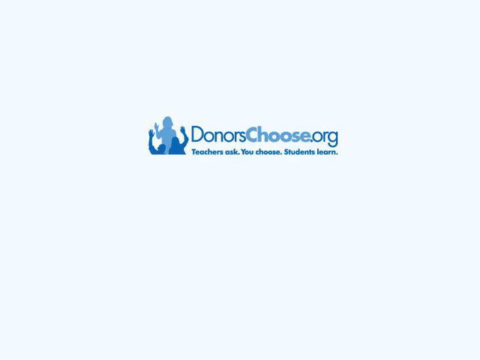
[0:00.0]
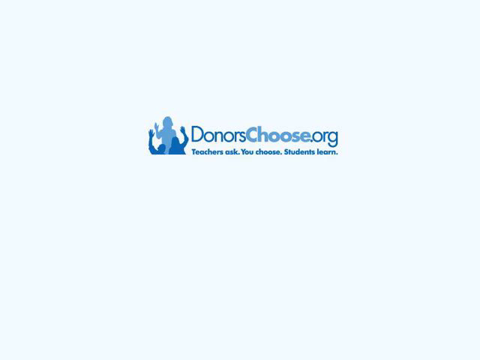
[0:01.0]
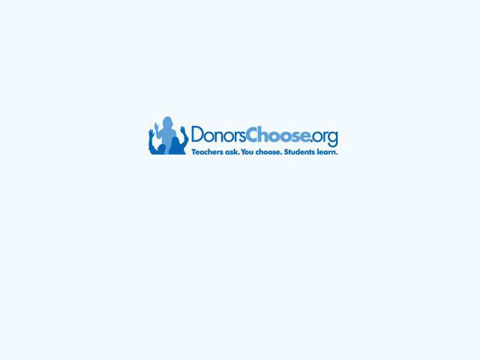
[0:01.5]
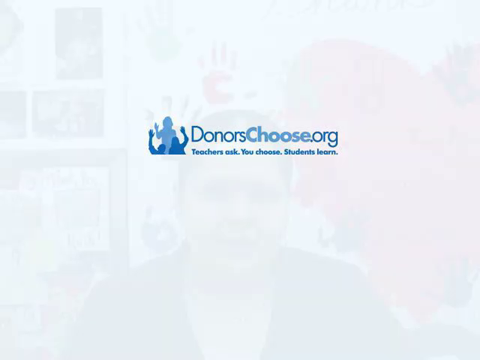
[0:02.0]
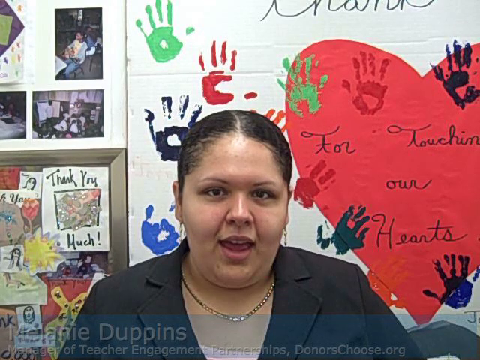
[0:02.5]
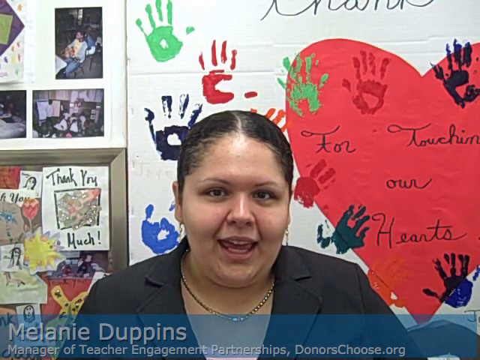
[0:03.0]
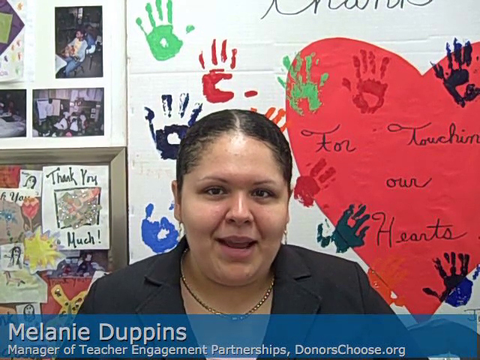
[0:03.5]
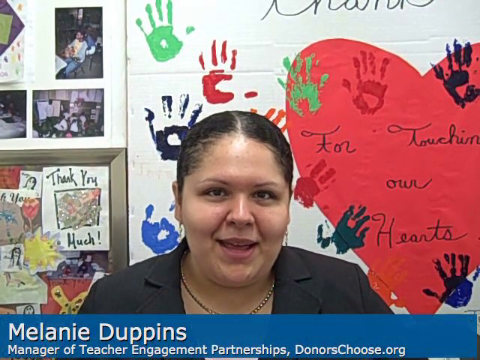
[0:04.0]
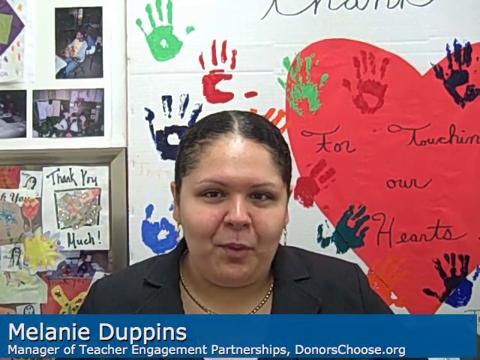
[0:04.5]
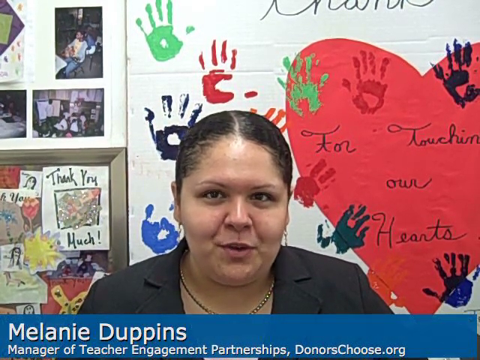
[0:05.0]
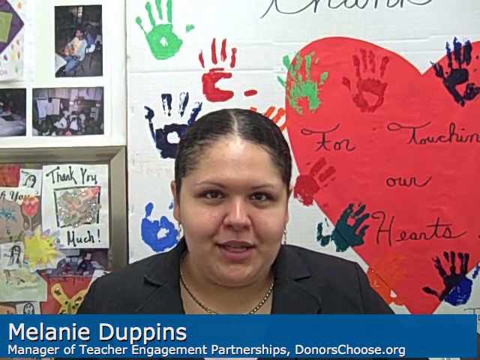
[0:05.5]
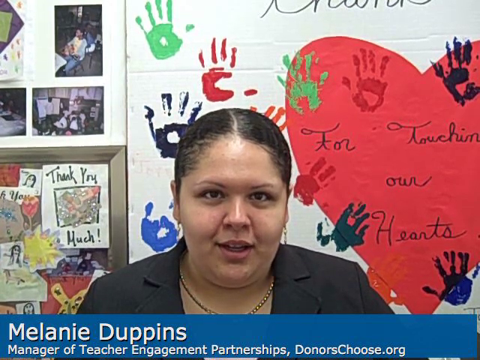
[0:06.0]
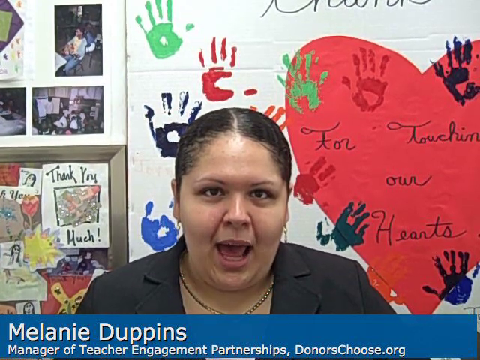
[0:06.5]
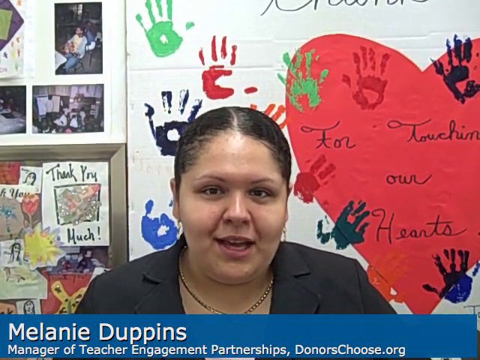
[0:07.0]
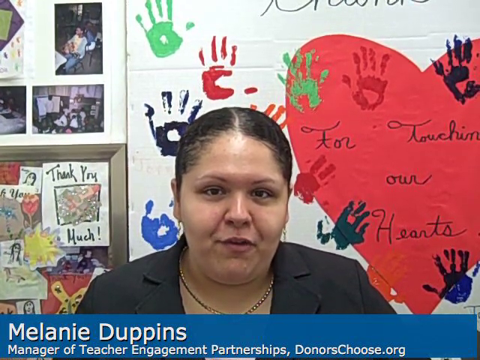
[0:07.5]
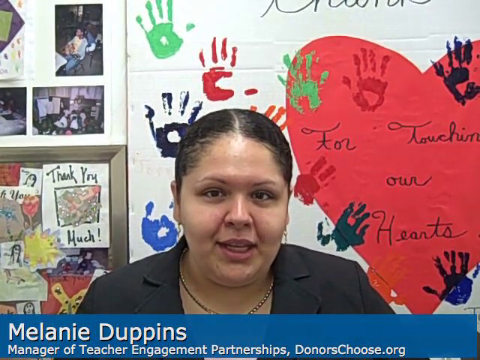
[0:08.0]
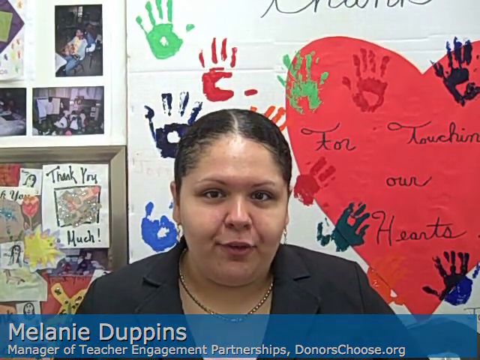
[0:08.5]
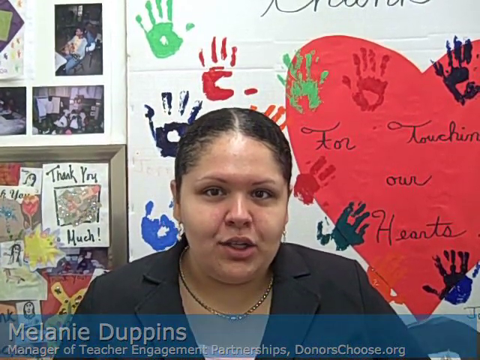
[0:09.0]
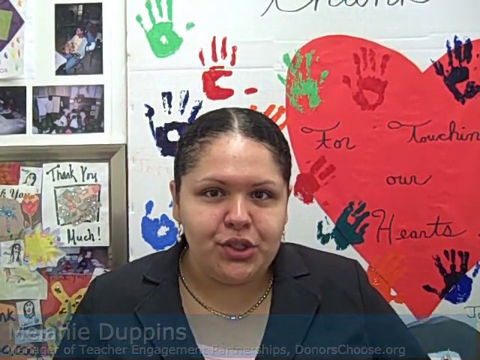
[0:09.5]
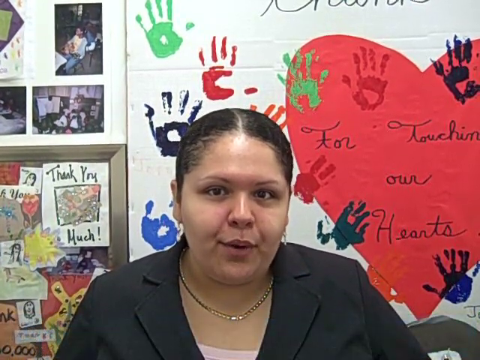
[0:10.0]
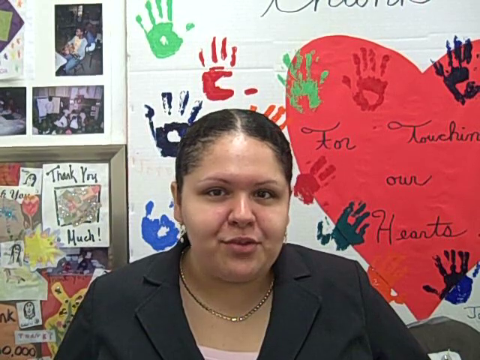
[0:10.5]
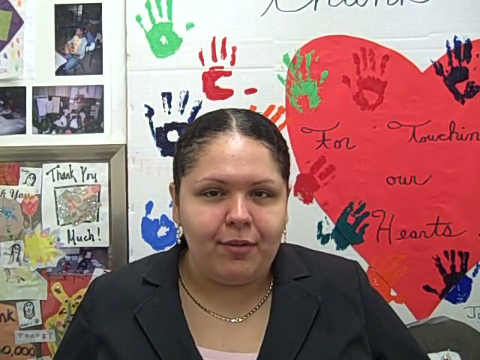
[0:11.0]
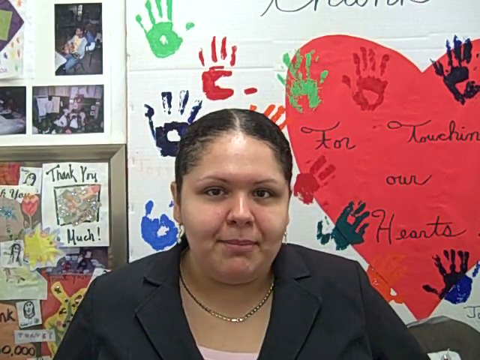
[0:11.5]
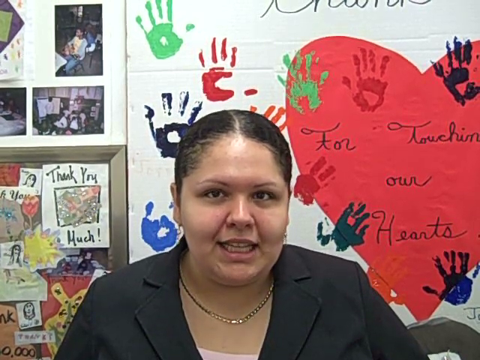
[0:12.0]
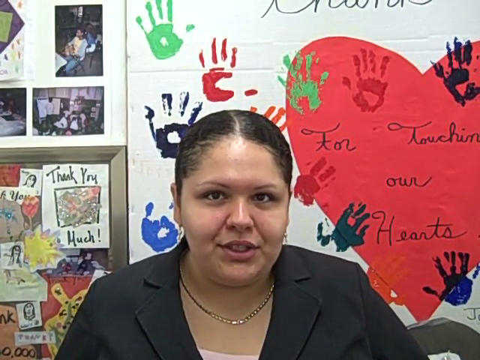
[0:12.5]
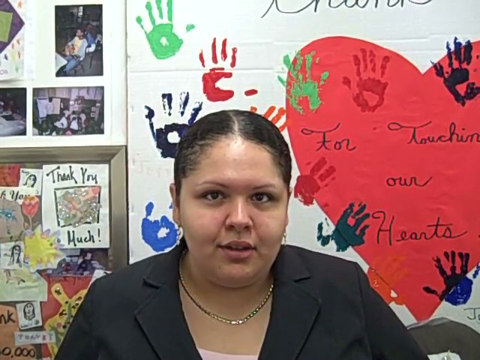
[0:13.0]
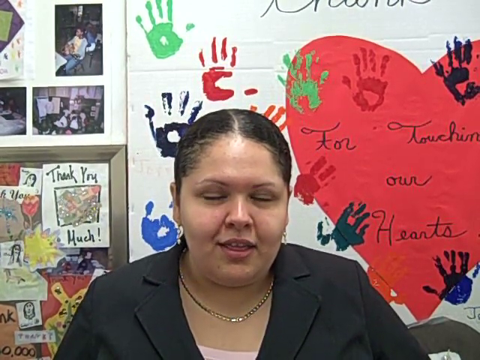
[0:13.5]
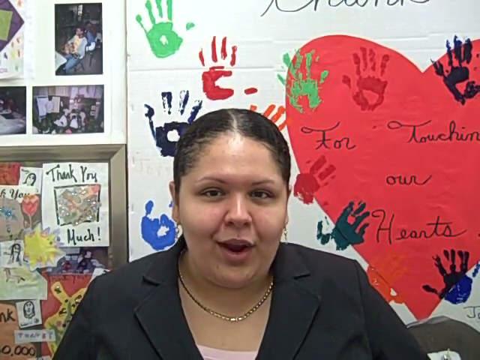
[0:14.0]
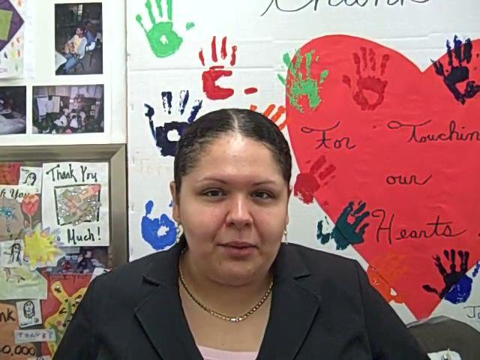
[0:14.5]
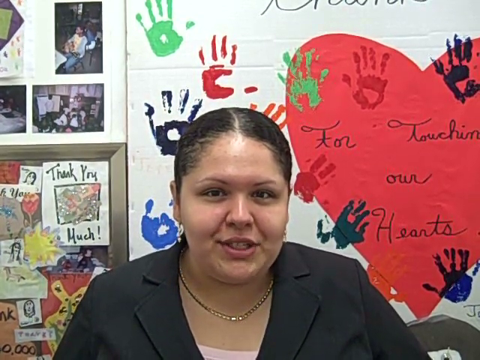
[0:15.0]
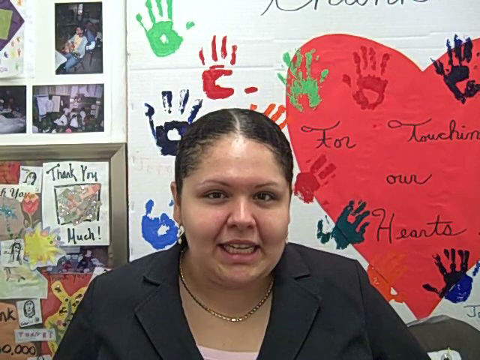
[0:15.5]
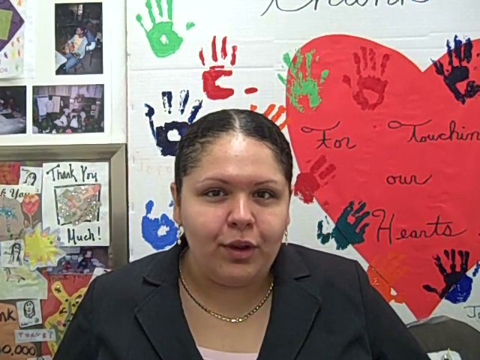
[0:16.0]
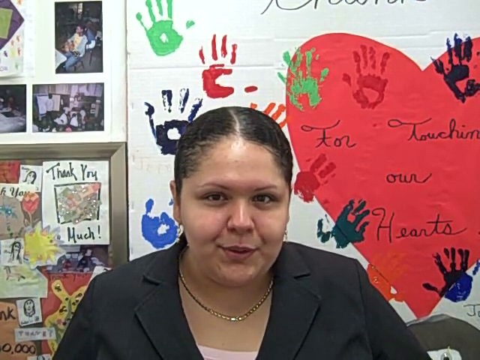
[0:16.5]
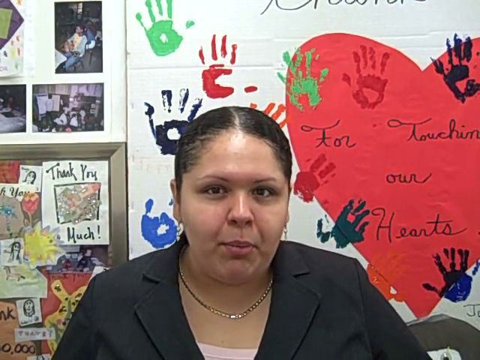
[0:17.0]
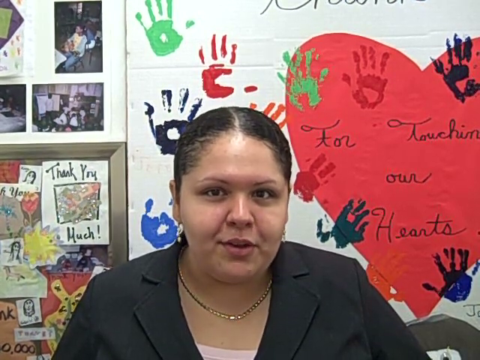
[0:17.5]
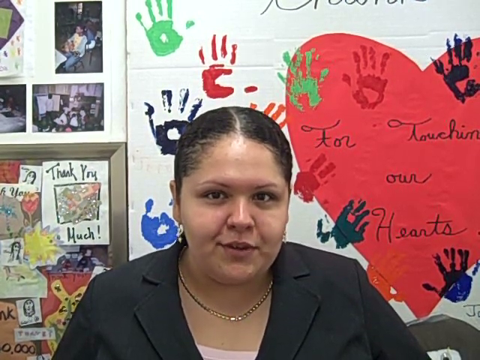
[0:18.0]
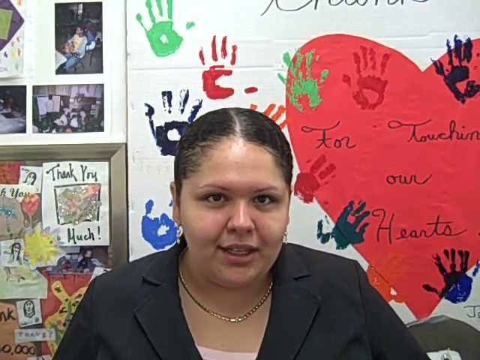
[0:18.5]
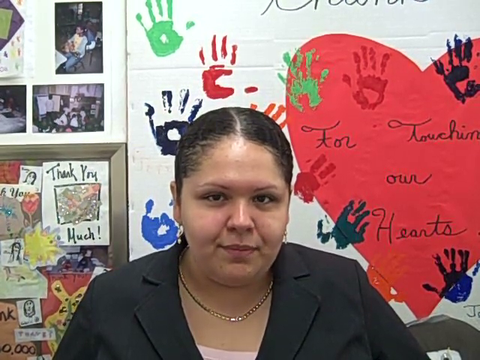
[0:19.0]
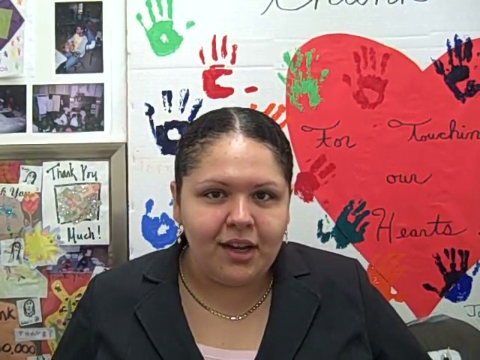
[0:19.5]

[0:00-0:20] A graphic with a white background shows the name of a site, "donorschoose.org". Below the name is text that says "Teachers ask you to choose Students Learn", and to the left is the organization's logo, made up of three different people. The screen fades to a woman called Melanie Duppins, a manager of teacher engagement partnerships at DonorChoose.org. She sits in her office, wearing a black blazer and a small, thin gold necklace. Behind her is some kind of artwork, apparently made by people who benefit from the charity organization; it consists of different kinds of handprints, hearts, and cards with wishes inside that thank her or the organization. There are also different kinds of pictures on the top left.